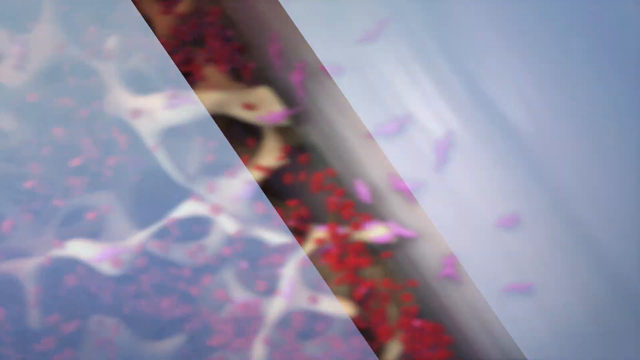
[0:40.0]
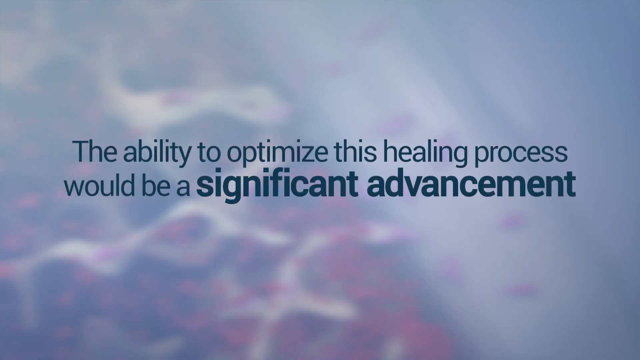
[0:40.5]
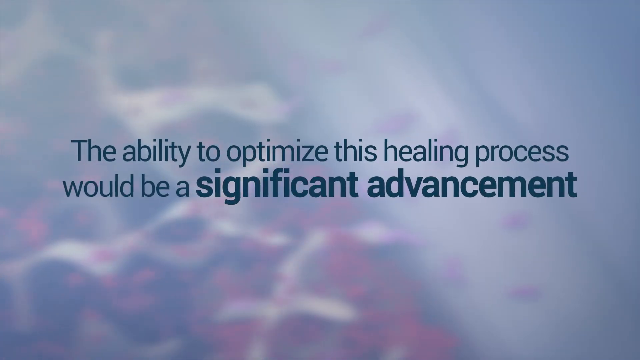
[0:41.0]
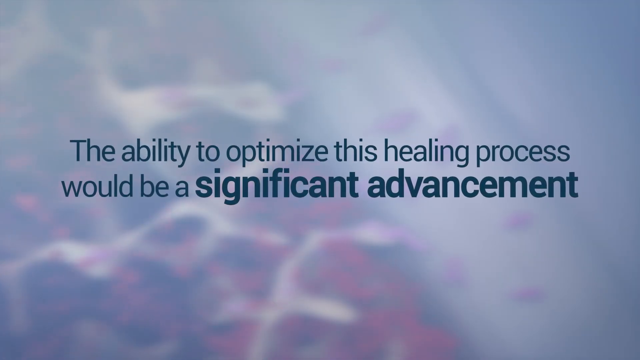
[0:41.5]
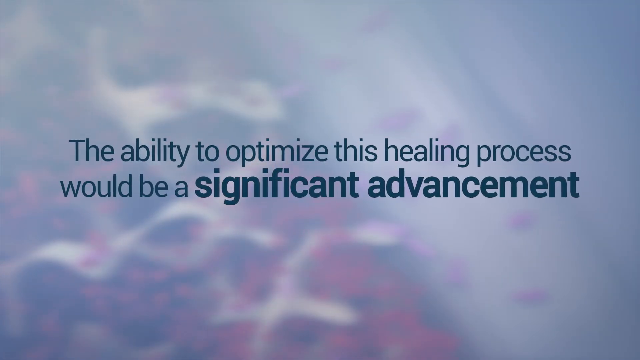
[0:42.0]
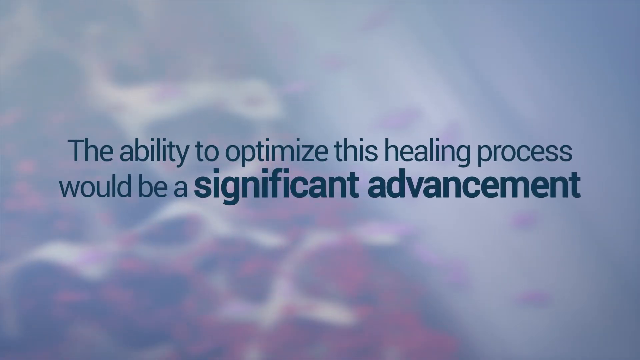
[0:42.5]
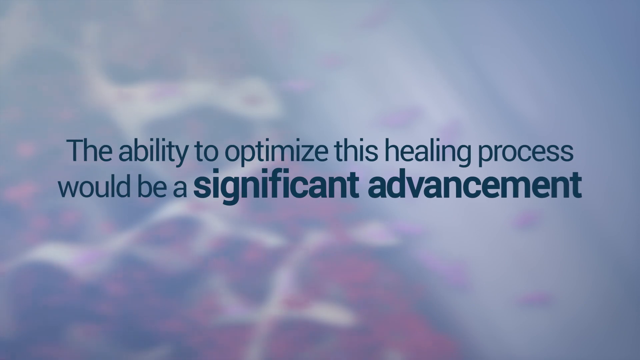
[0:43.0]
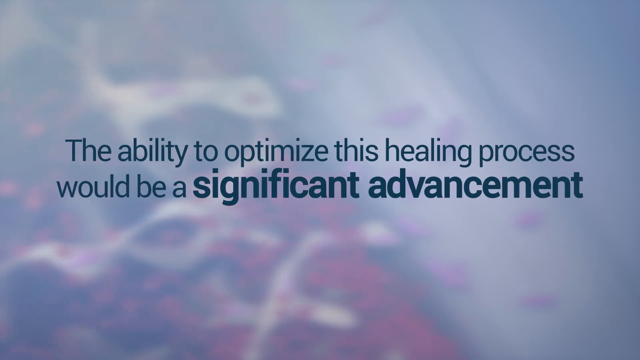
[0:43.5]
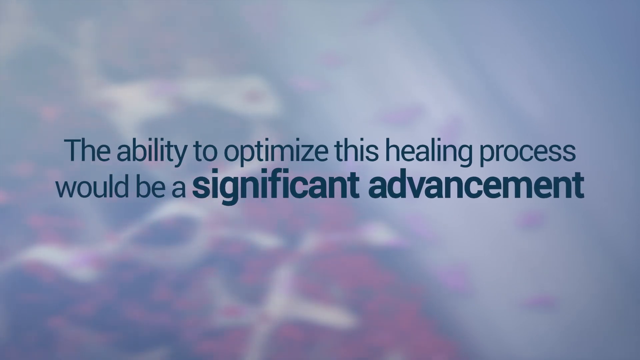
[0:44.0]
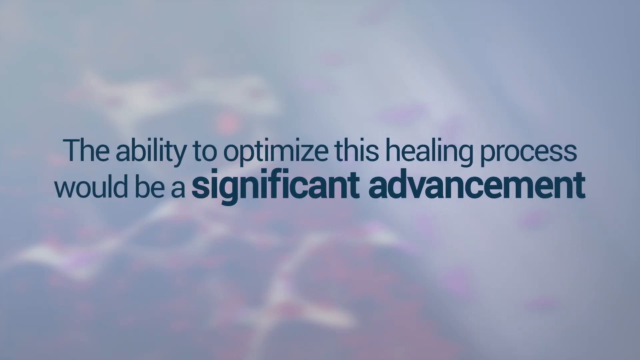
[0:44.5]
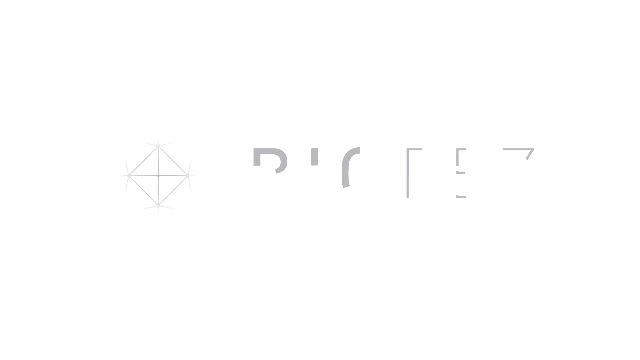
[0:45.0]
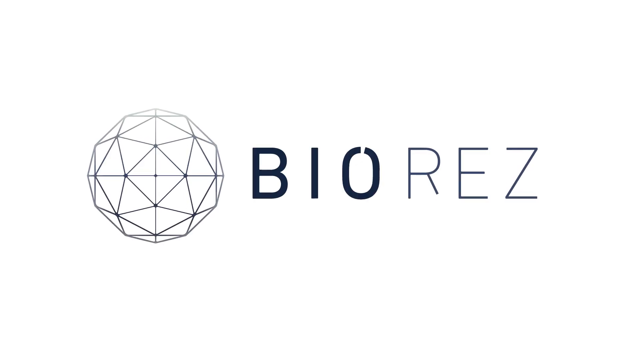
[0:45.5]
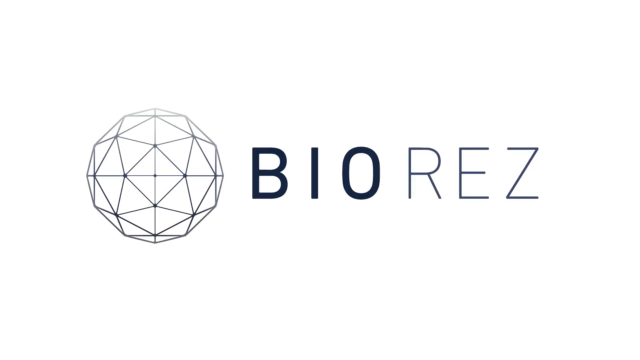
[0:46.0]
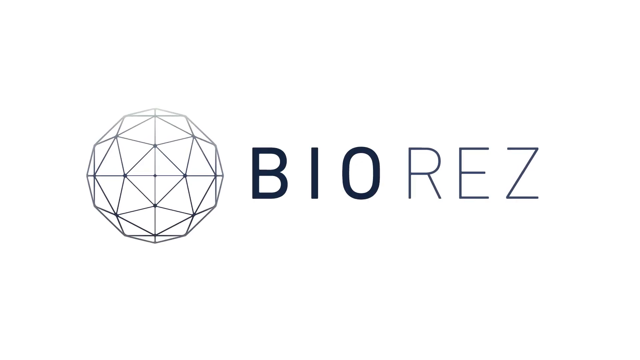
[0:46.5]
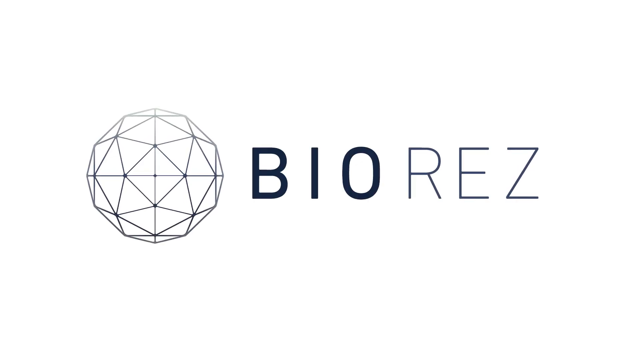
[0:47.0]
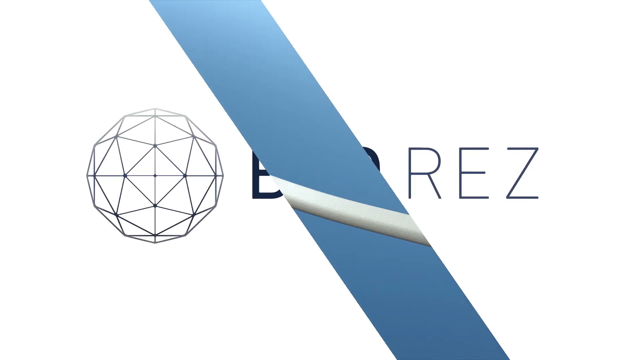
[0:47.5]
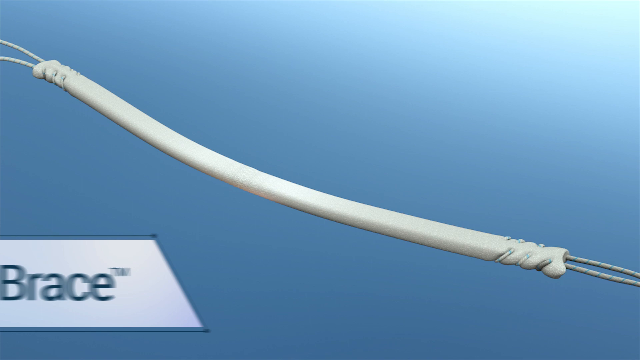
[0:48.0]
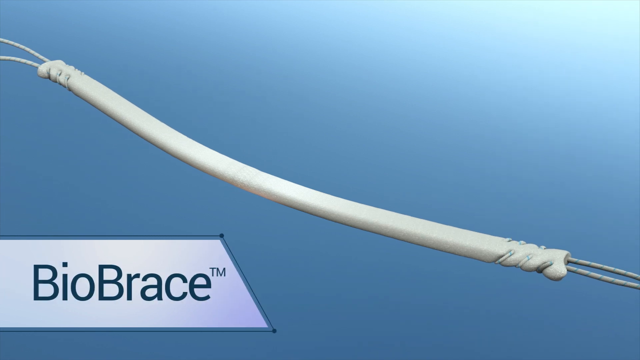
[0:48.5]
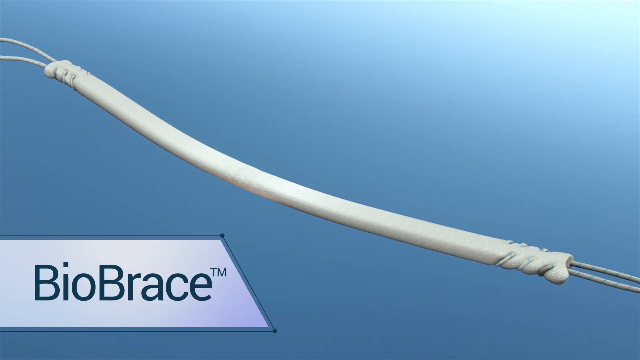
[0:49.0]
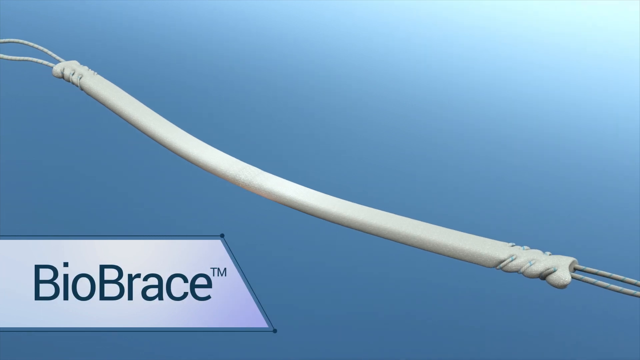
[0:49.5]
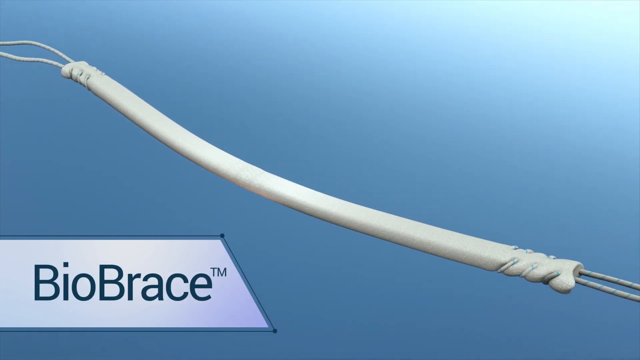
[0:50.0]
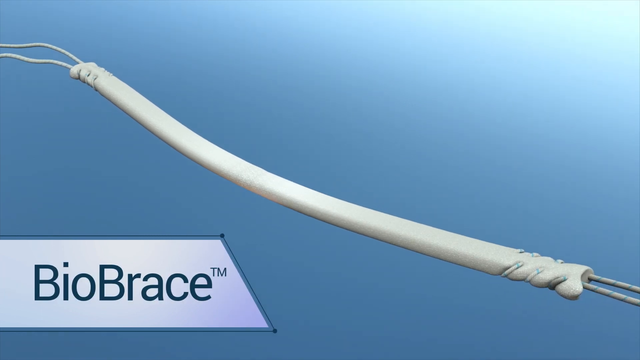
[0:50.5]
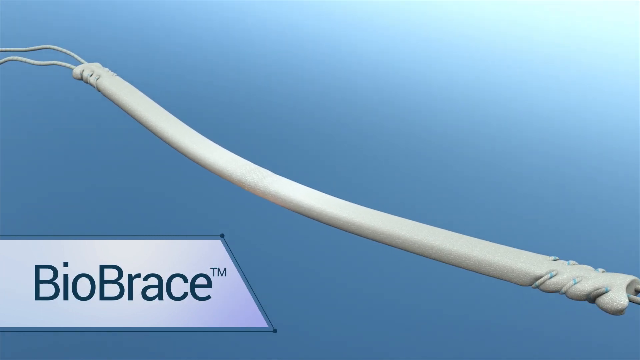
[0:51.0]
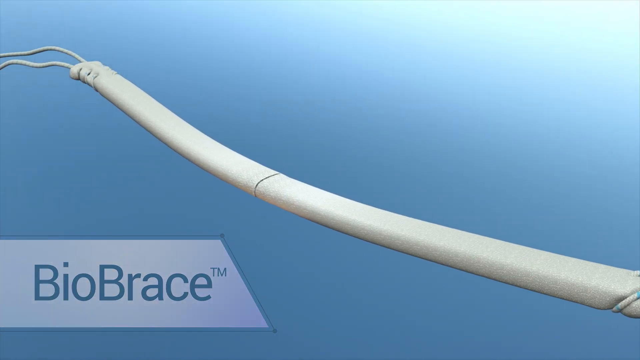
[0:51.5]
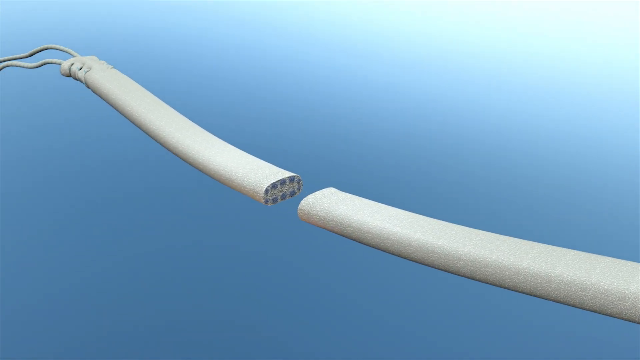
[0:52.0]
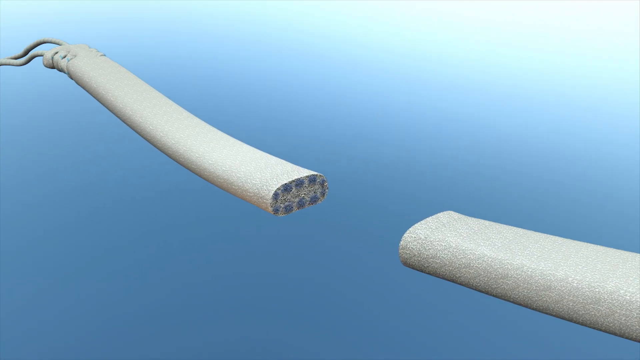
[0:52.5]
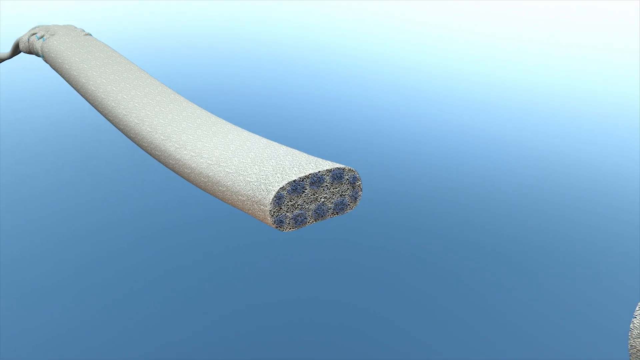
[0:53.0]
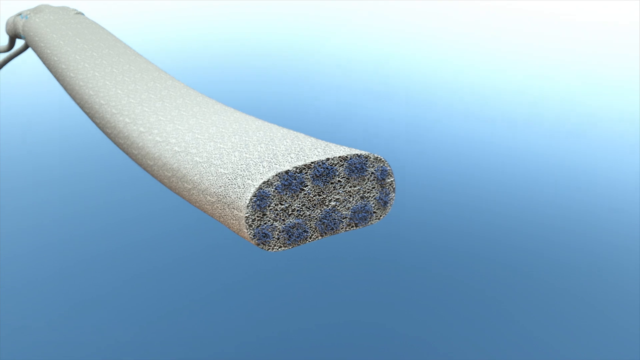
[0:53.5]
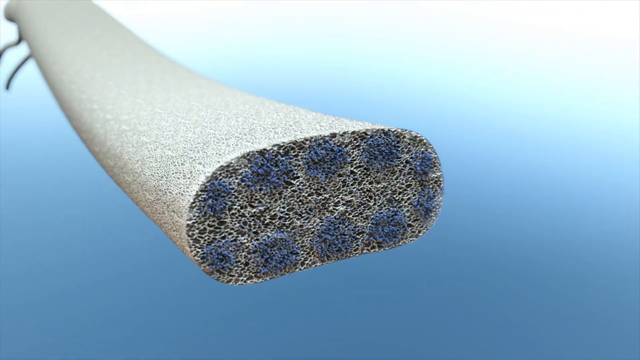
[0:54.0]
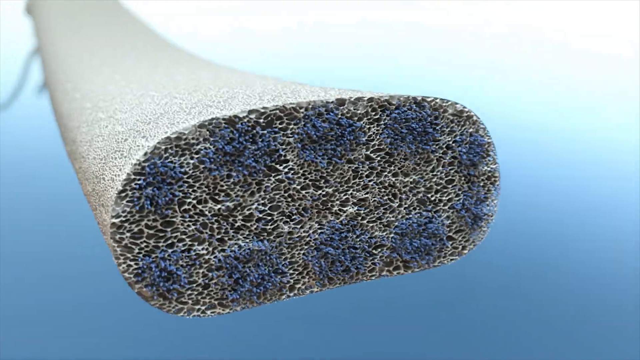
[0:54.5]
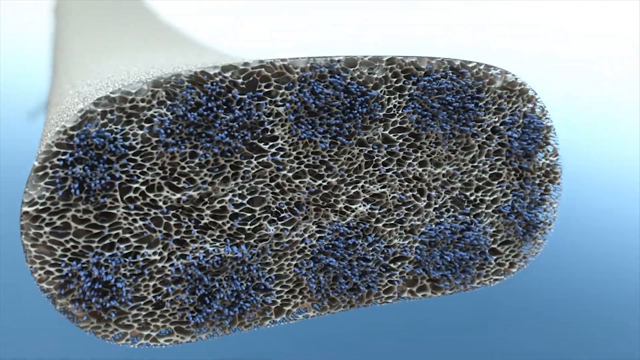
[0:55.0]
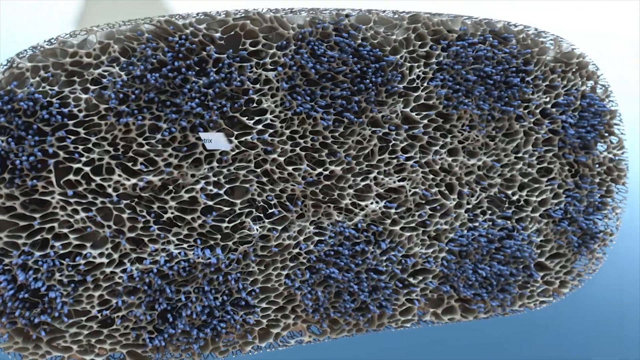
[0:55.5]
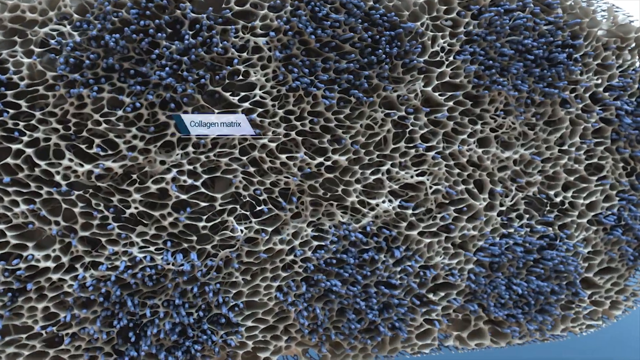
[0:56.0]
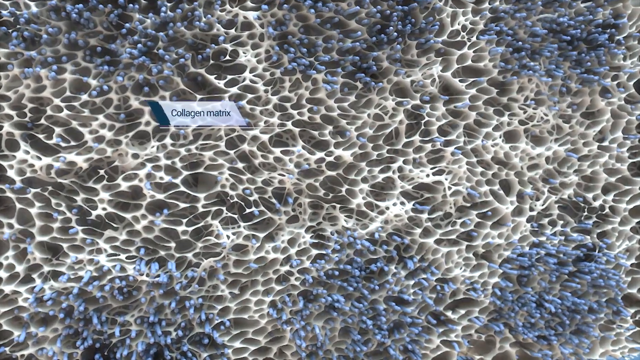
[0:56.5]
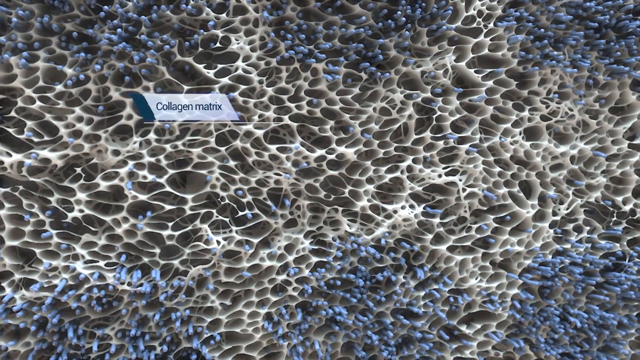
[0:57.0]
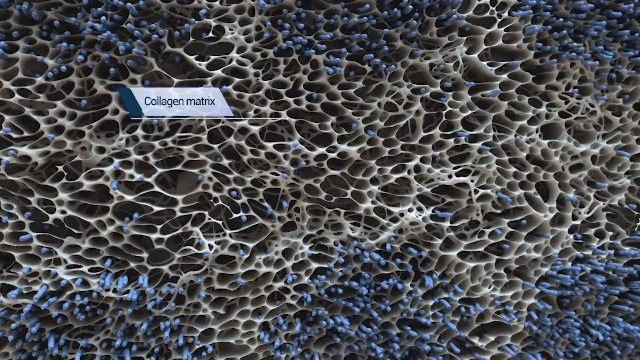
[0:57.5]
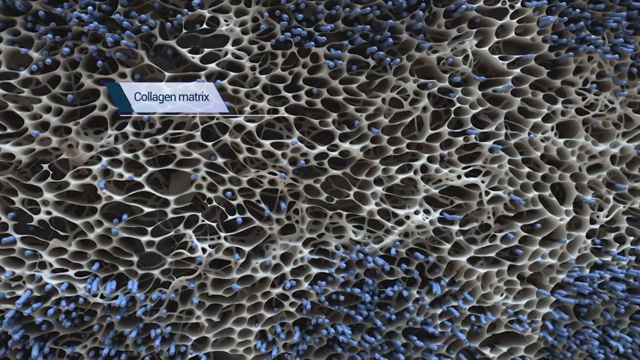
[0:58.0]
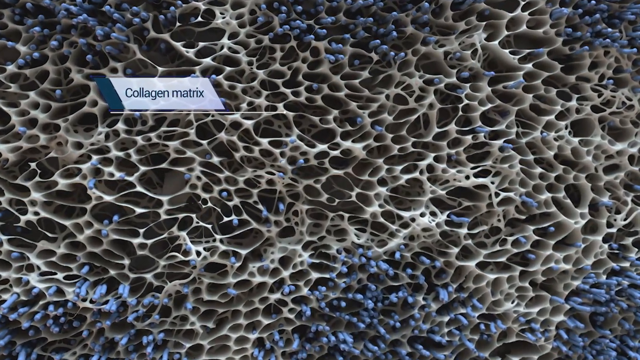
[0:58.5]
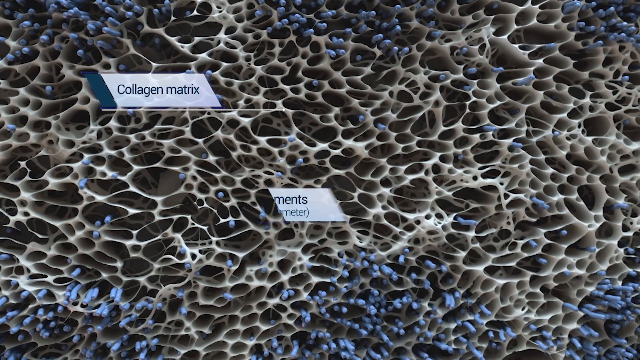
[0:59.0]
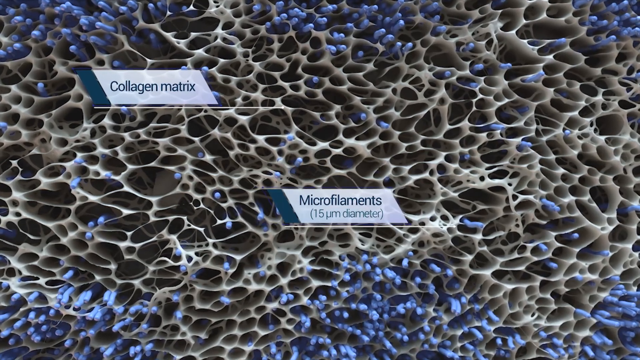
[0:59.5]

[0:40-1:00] Another screen appears, again with what looks like an out-of-focus photograph containing some white and red in the background. Blue lettering reads "the ability to optimize this healing process would be a significant advancement", with the first line ending at "process" and "significant advancement" in bold, slightly larger letters. The text is centered both vertically and horizontally. The top line then slides up and the bottom line slides down, revealing a white background that is a little darker at the bottom, with the same logo as before, which looks kind of like a geodesic dome but round, and the text "BIORES" in capital letters as one word, with "BIO" in bold. It then switches to a picture of some kind of tube running from near the top left to near the bottom right, with "bio brace TM" on the bottom left. The camera zooms in on the tube, which splits in the middle, and zooms in more to show the inside of the tube, which has some blue and gray things in it. An extreme close-up of the inside of the tube follows; it looks like a network of white things with round blue patches. The camera zooms in further until the inside of the tube fills the whole screen, and a small text box reads "collagen matrix". The view keeps coming closer to the viewer, and another text box appears reading "micro filaments" with "(15 um diameter)" underneath. In this close-up, the blue things are like stalks sticking up on end.